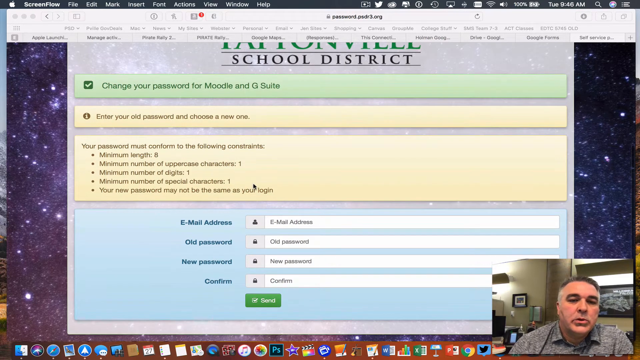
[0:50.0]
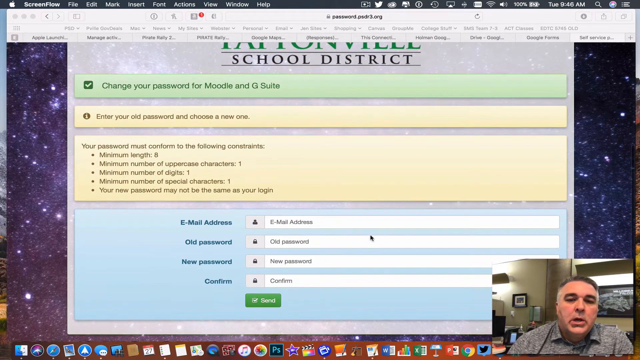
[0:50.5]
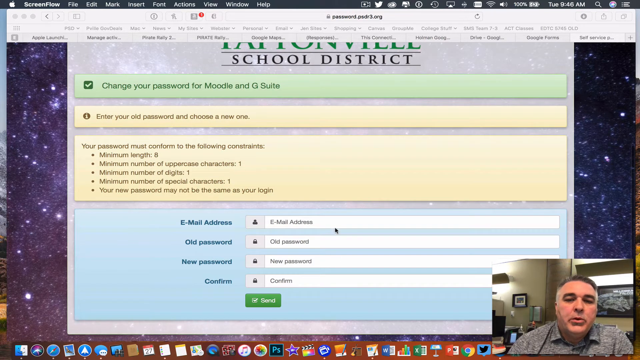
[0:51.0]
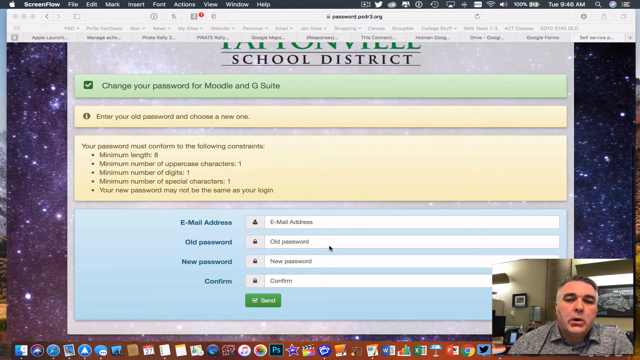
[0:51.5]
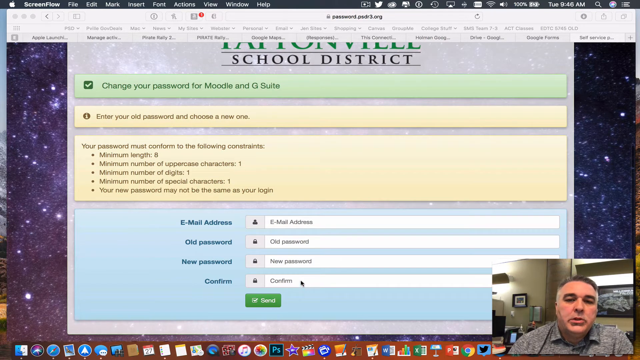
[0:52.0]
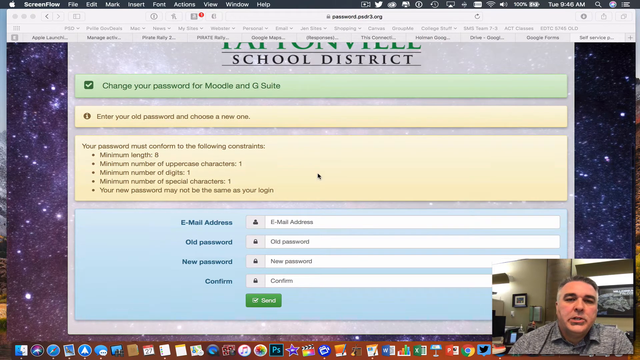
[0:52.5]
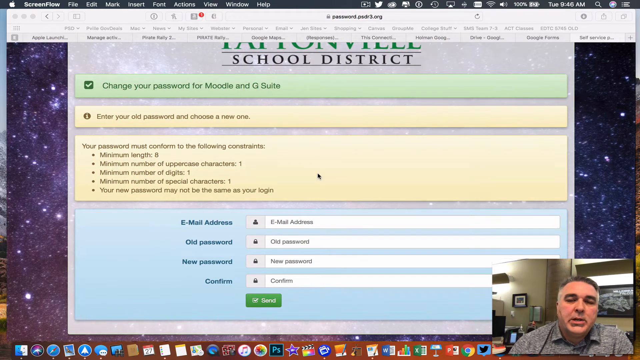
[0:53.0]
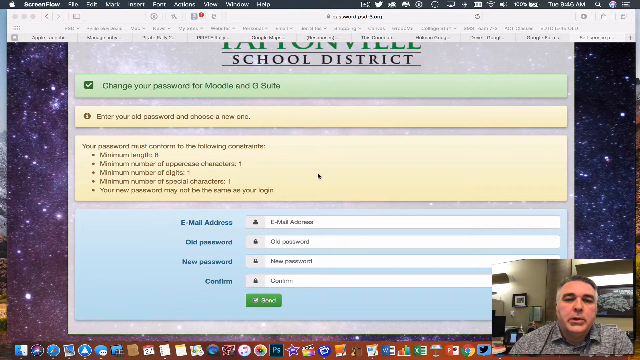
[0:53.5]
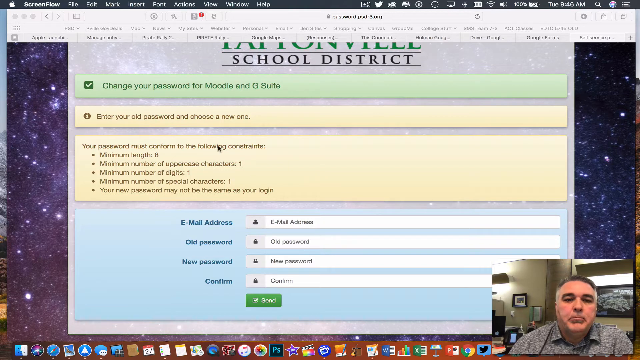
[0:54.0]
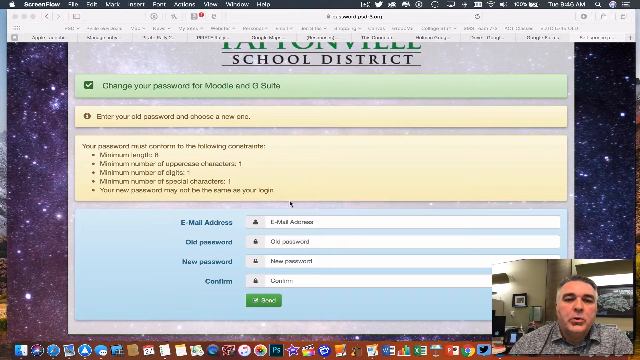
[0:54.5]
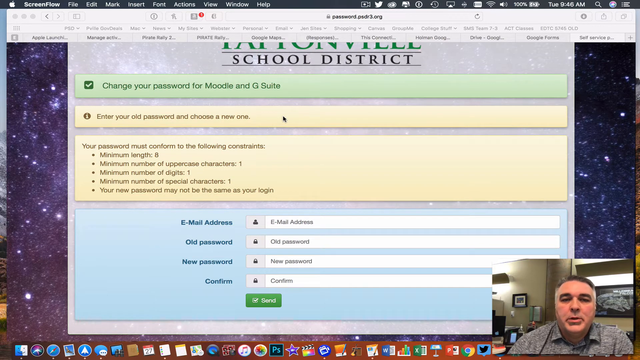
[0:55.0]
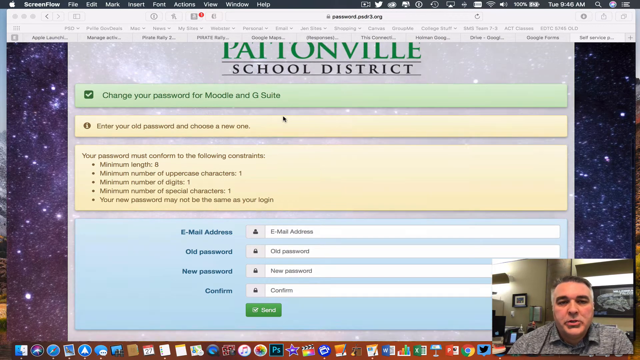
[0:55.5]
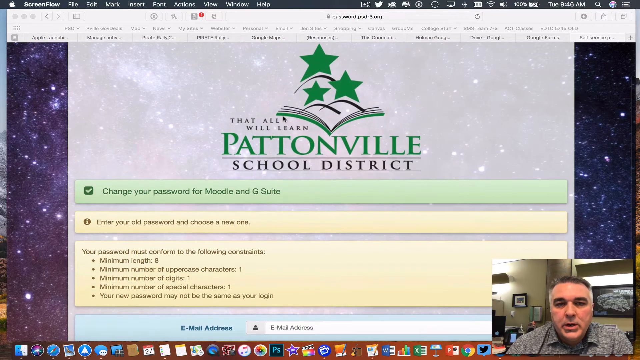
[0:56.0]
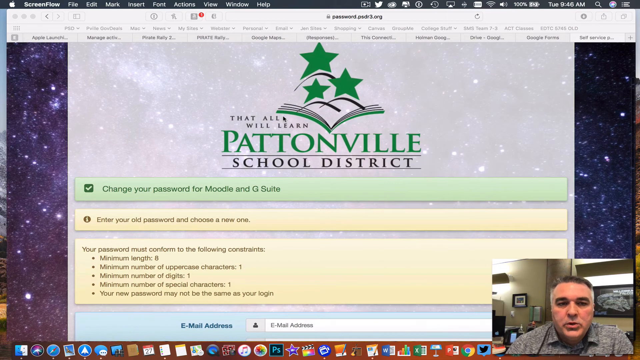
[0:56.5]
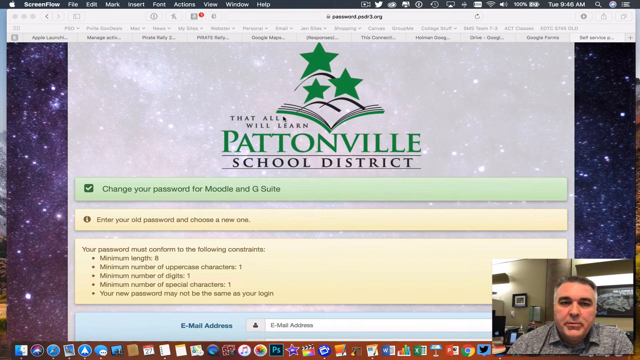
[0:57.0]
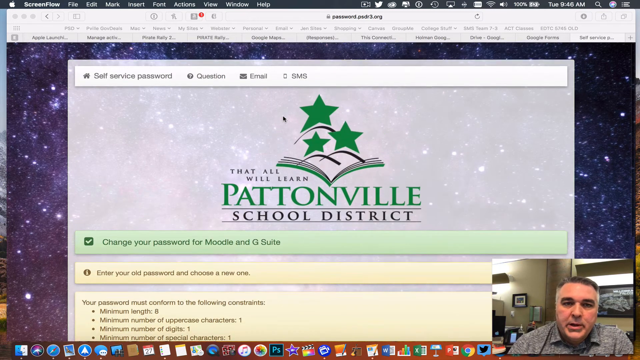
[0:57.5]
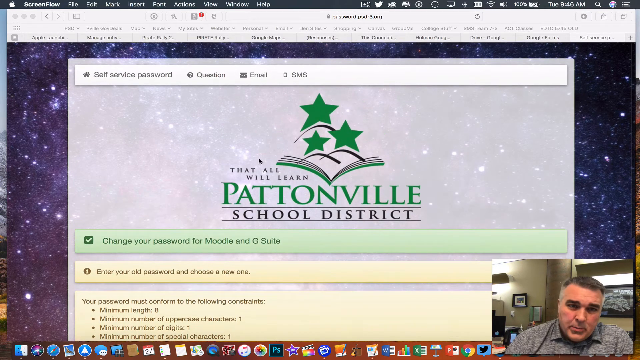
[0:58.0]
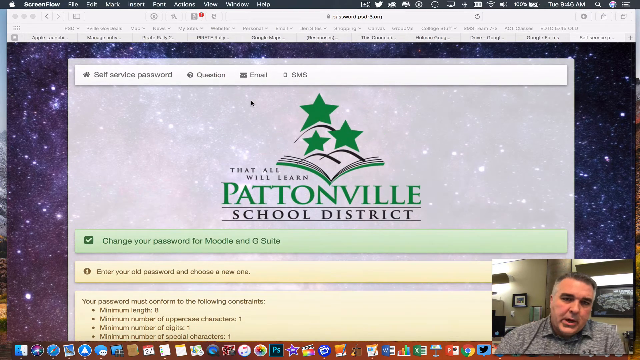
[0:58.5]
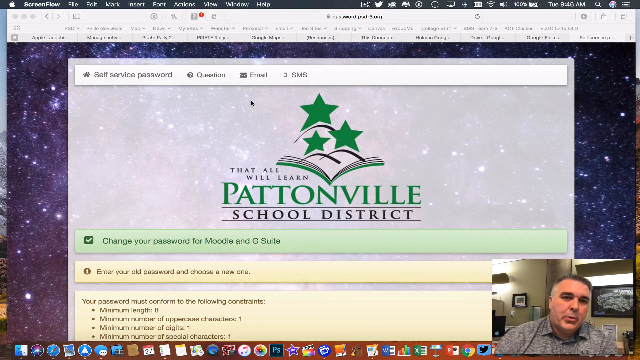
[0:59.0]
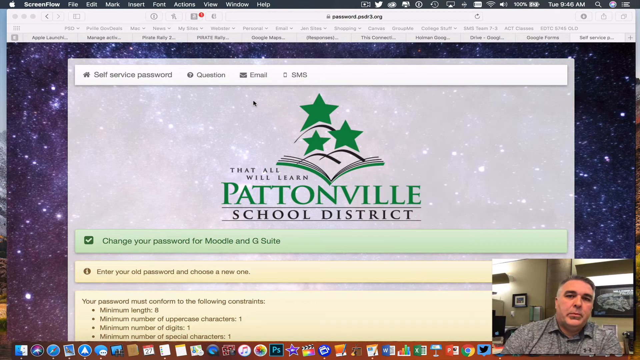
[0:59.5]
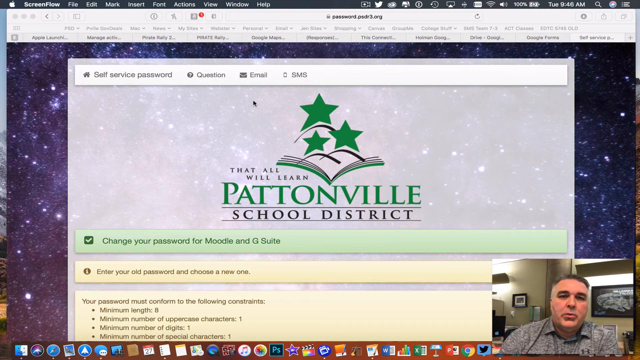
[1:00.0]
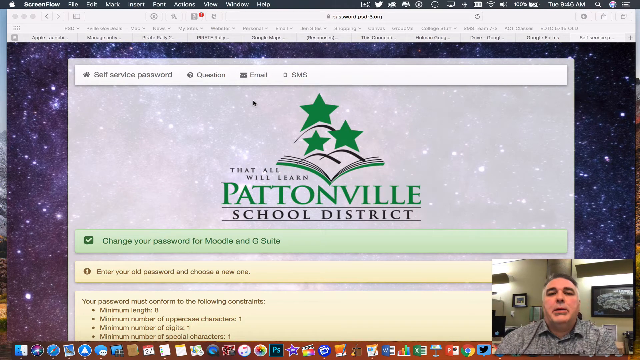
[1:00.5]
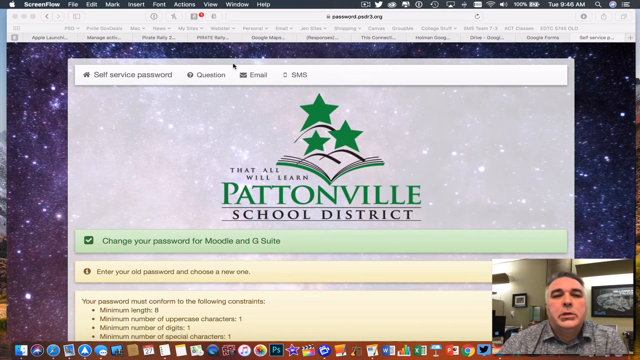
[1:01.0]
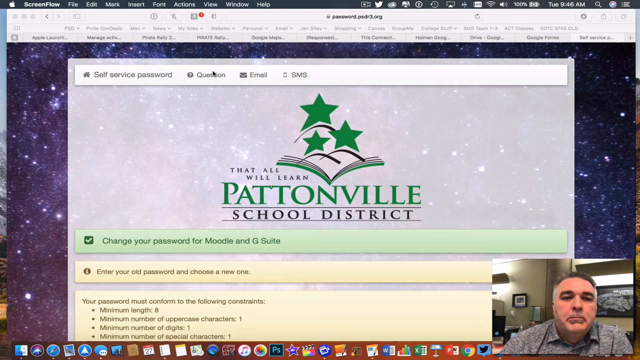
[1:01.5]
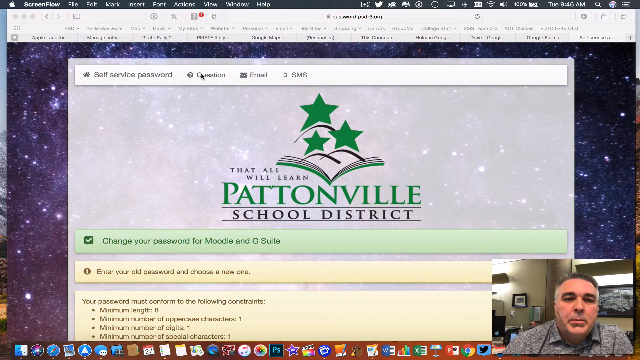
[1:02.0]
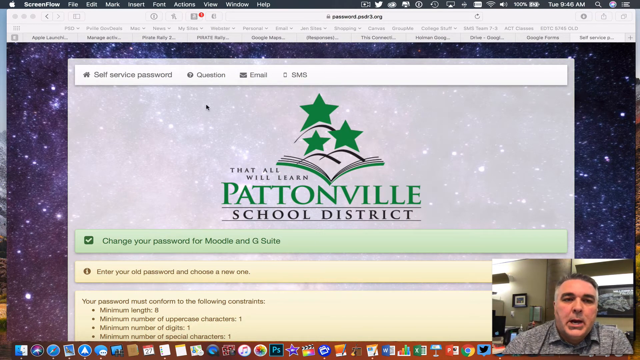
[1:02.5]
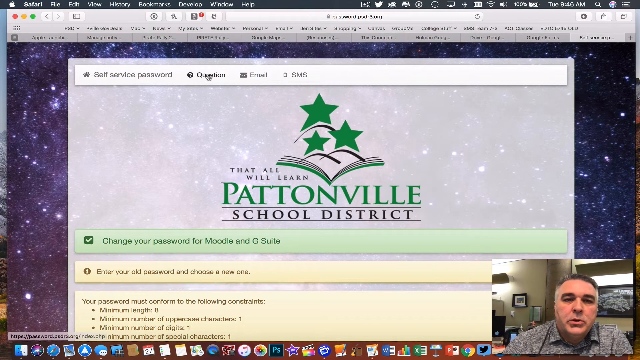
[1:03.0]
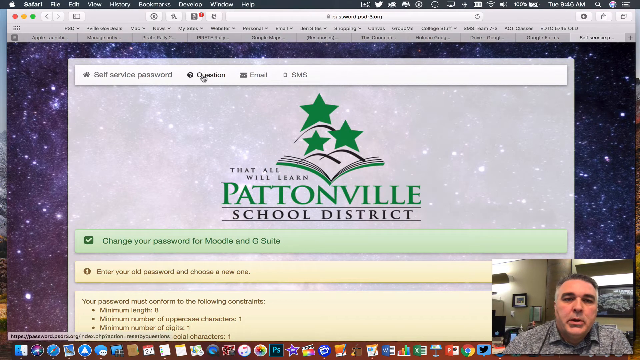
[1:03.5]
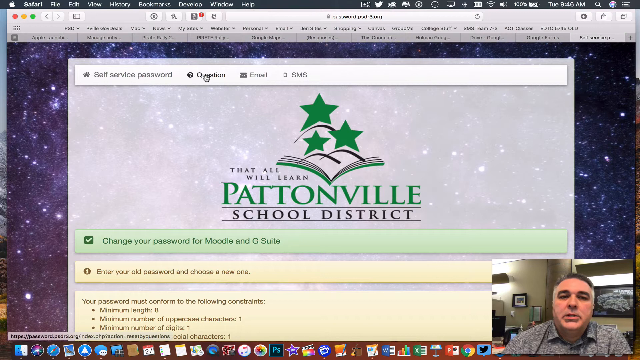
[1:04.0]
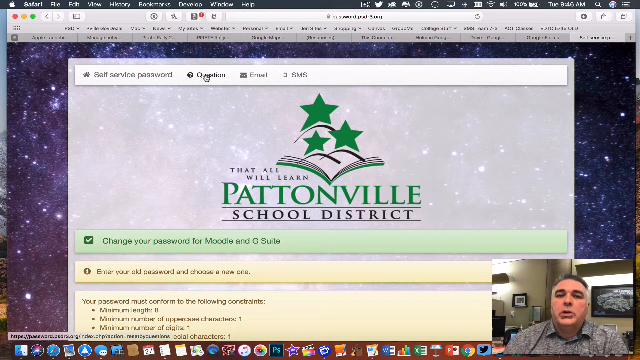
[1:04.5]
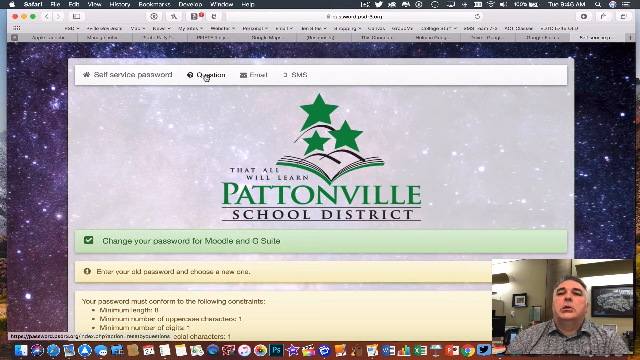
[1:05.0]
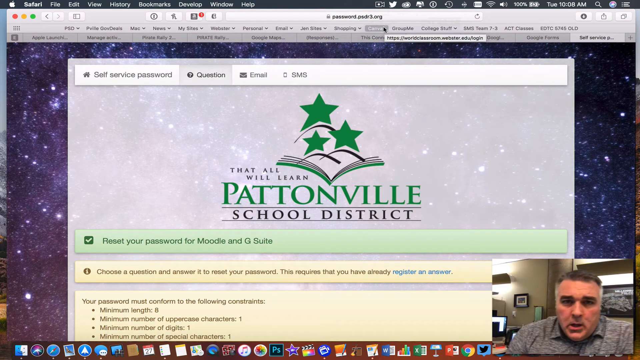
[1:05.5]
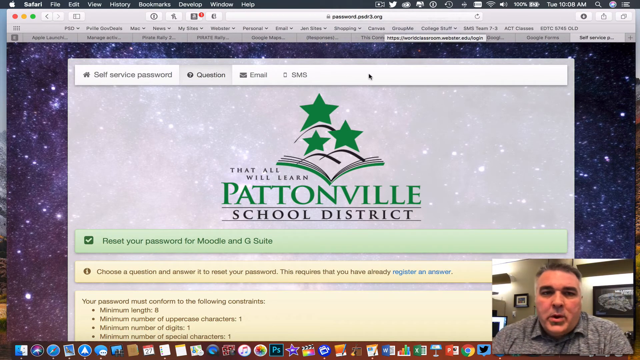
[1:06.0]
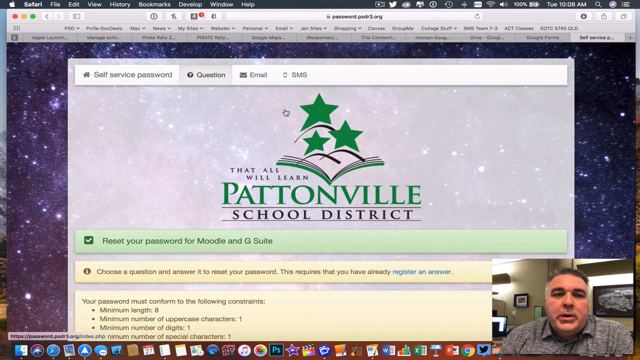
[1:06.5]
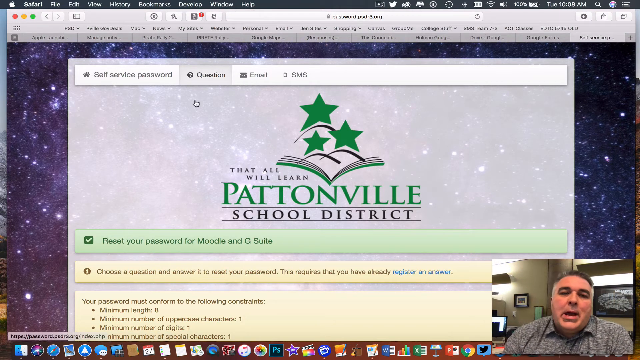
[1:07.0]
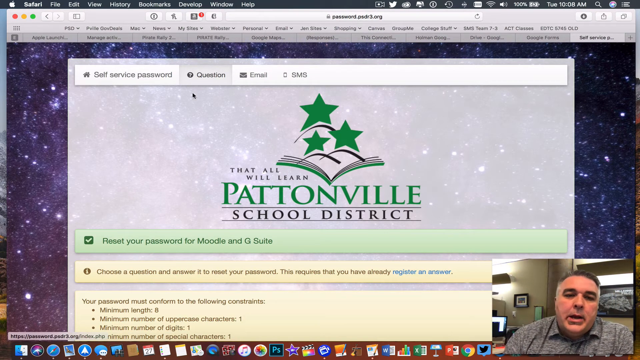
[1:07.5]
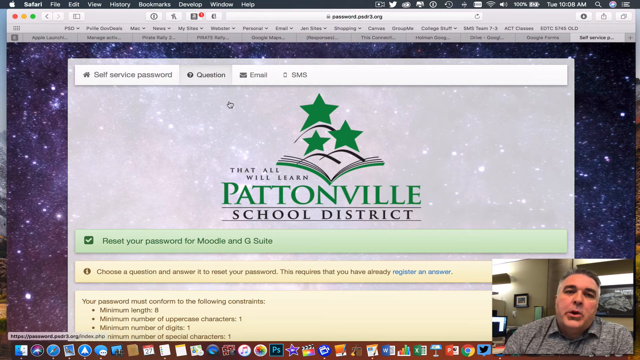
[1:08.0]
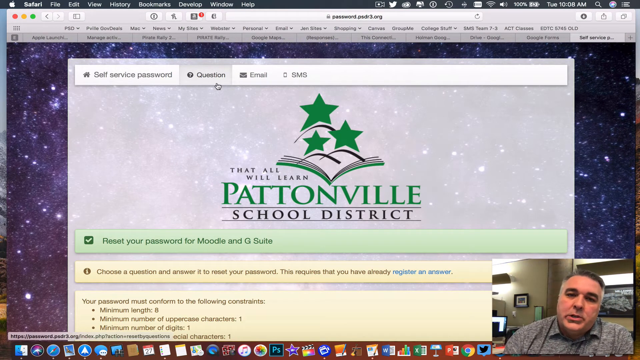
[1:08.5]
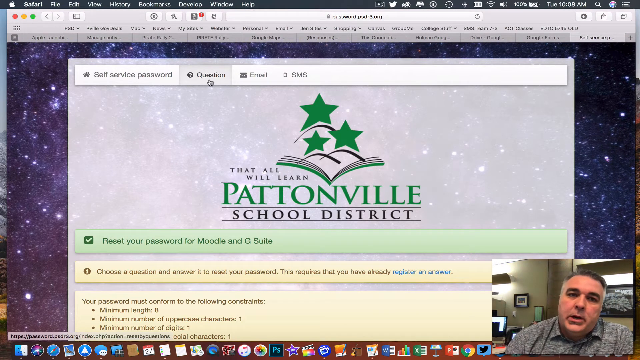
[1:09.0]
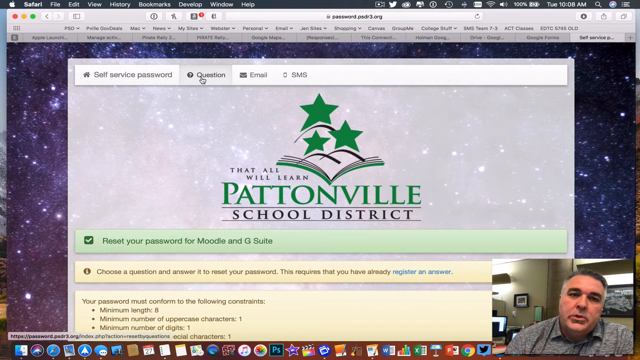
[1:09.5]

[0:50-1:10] The view stays at the lower part of the page. In the blue section, in a slightly darker blue font, are the labels "email address" with a space to its right for typing, then "old password," "new password" and "confirm," each with a space. The man circles the password, then circles the constraints, which read "your password must confirm to the following constraints," "minimum length eight, minimum number of uppercase capitals one, minimum number of digits one," "minimum number of special capitals one" and "Your new password must not be the same as your login." He hovers the mouse over the email address area, scrolls back up to a button for "question," and clicks it, and the button becomes highlighted.